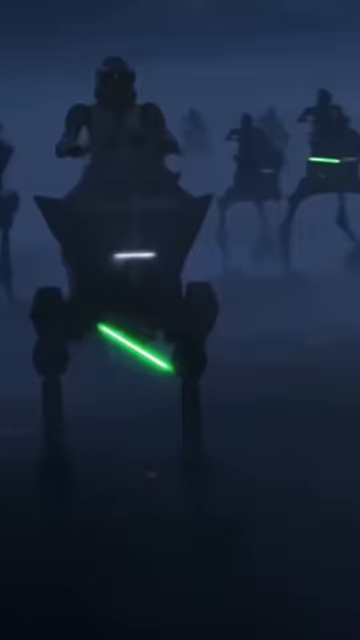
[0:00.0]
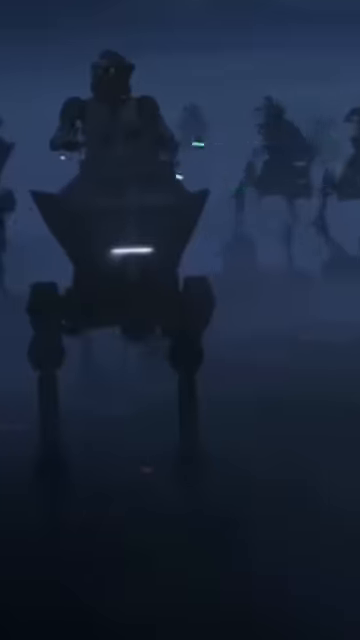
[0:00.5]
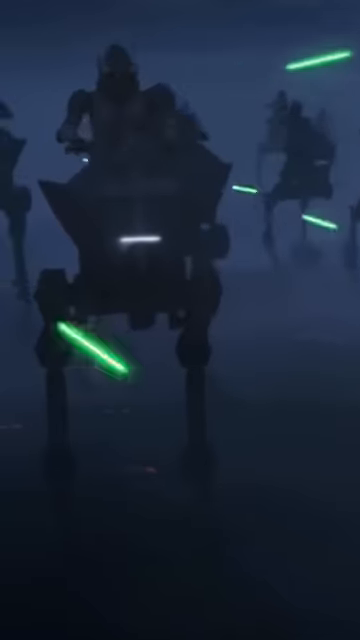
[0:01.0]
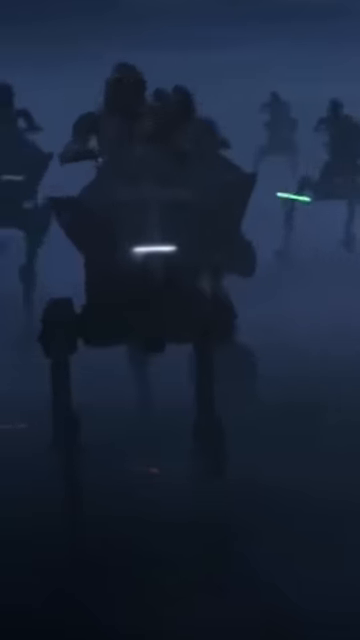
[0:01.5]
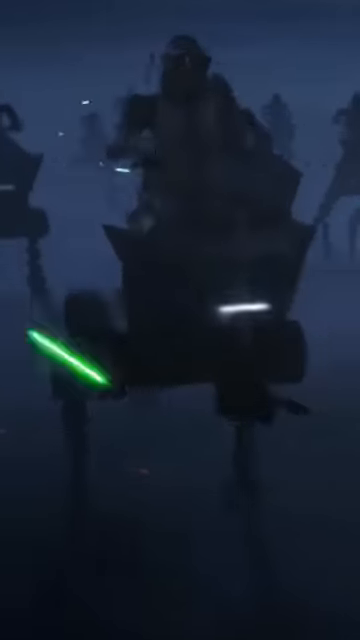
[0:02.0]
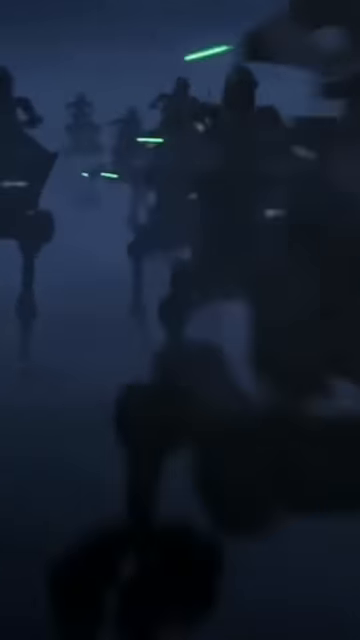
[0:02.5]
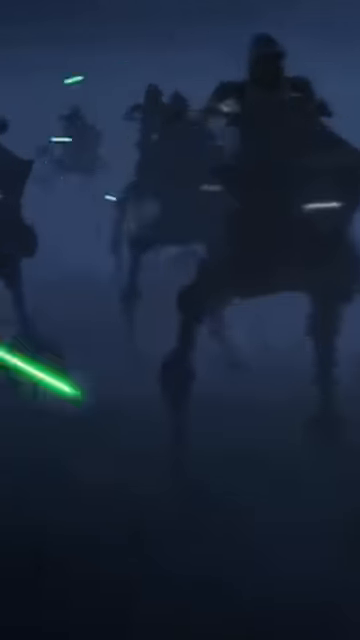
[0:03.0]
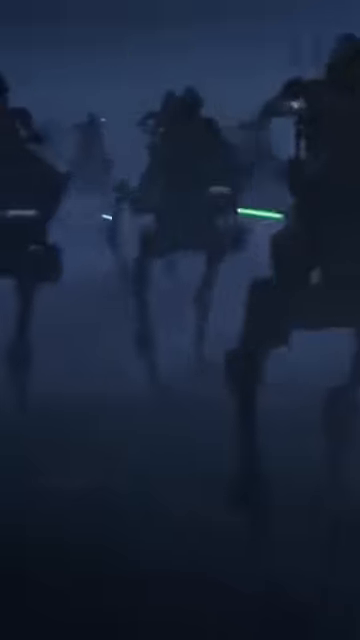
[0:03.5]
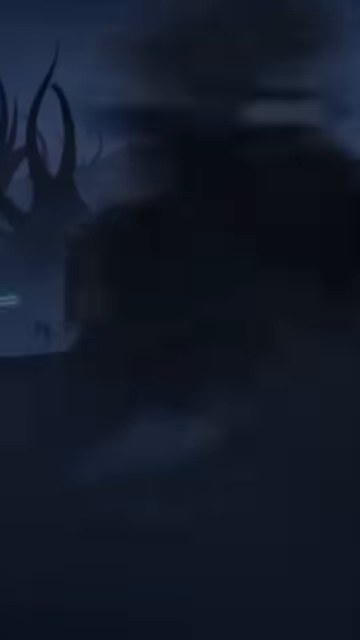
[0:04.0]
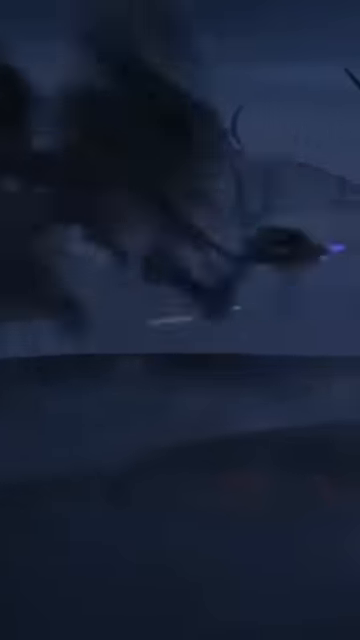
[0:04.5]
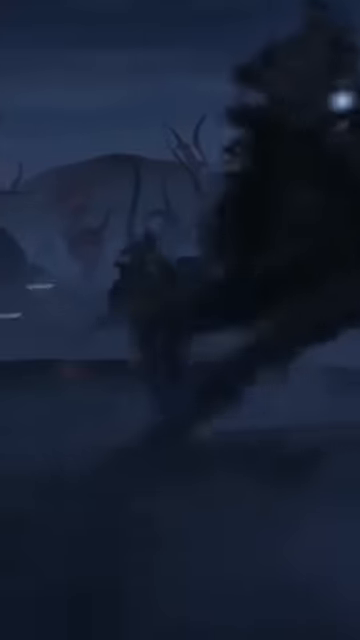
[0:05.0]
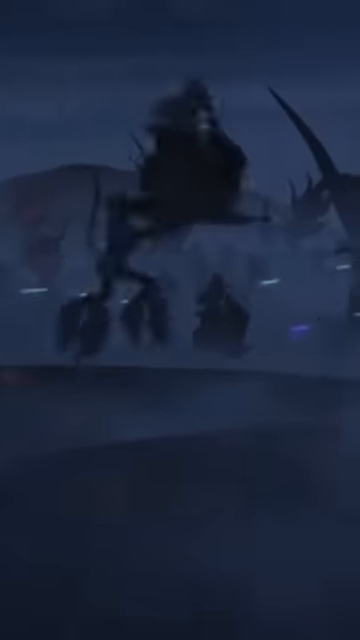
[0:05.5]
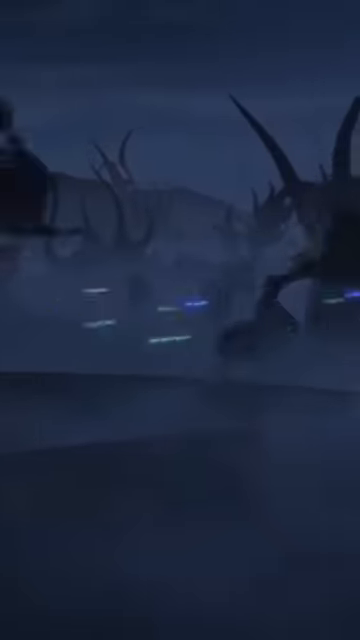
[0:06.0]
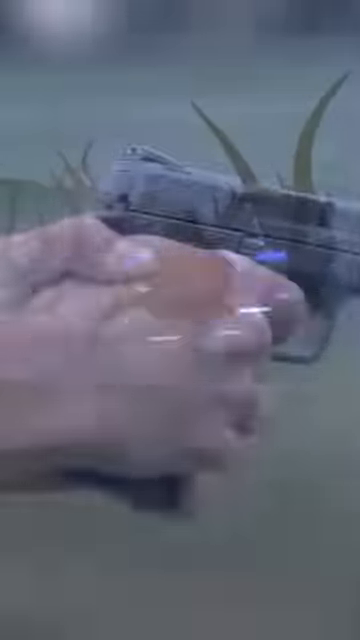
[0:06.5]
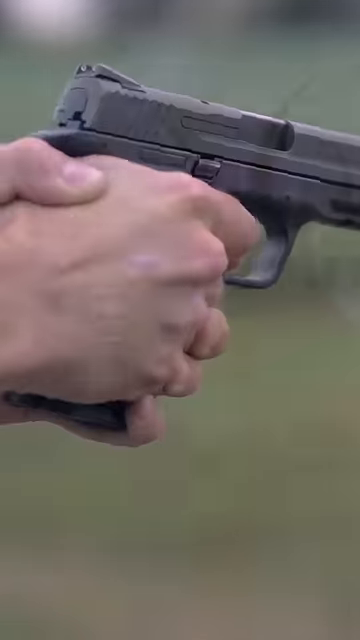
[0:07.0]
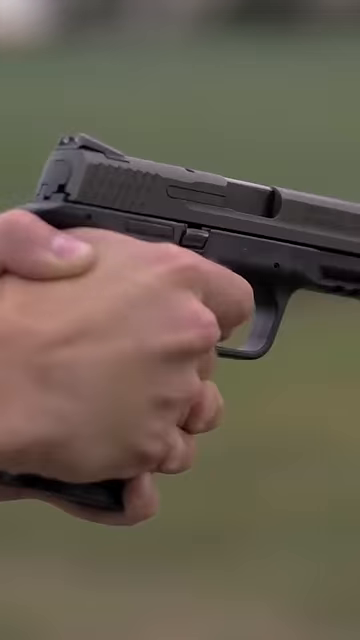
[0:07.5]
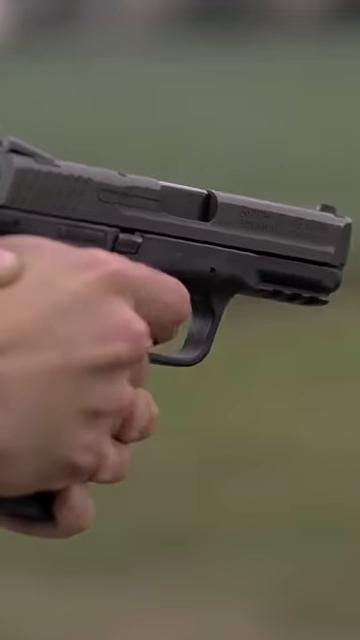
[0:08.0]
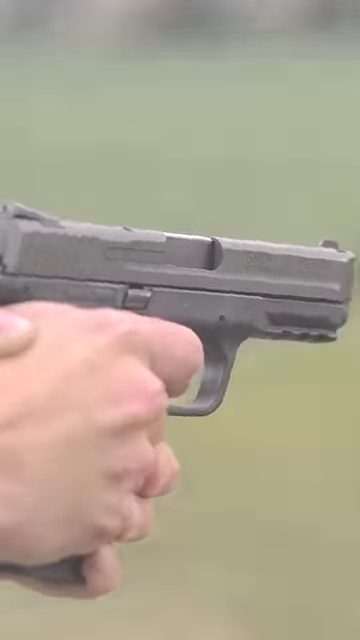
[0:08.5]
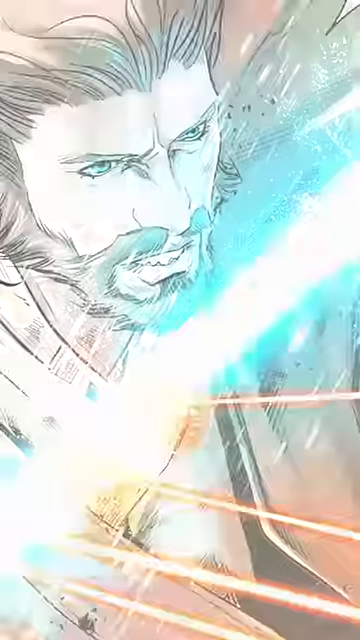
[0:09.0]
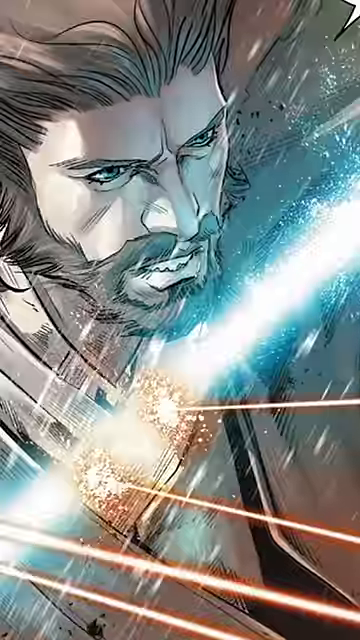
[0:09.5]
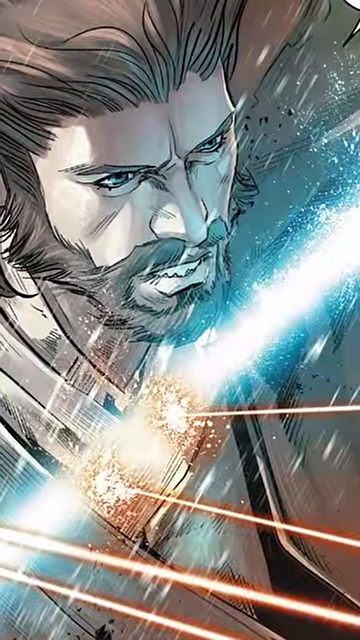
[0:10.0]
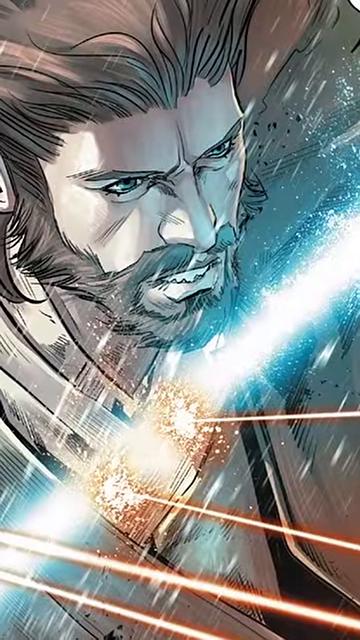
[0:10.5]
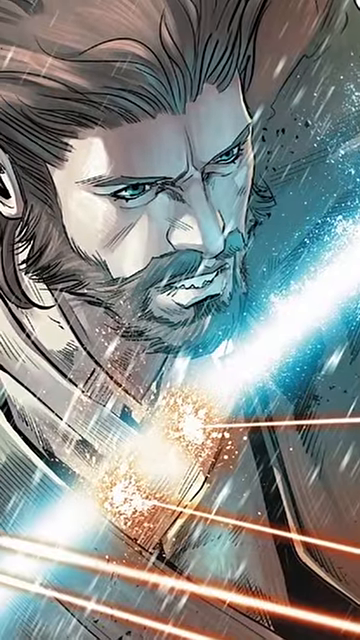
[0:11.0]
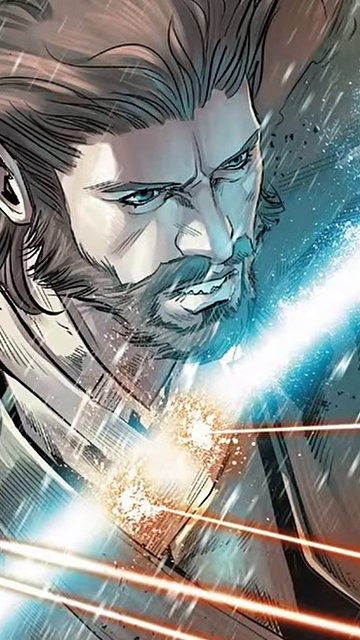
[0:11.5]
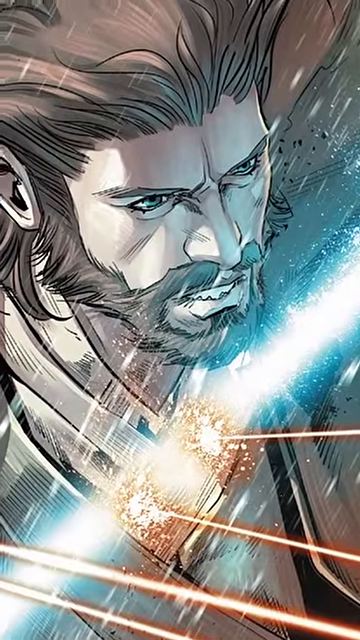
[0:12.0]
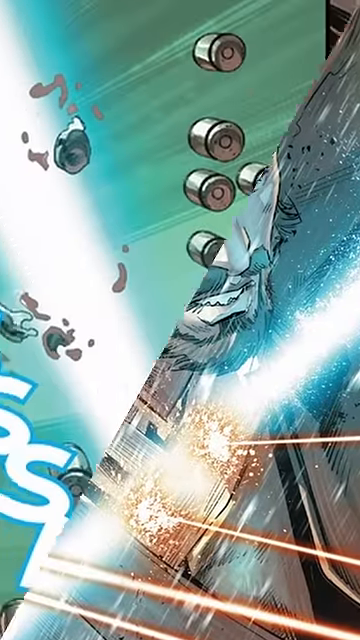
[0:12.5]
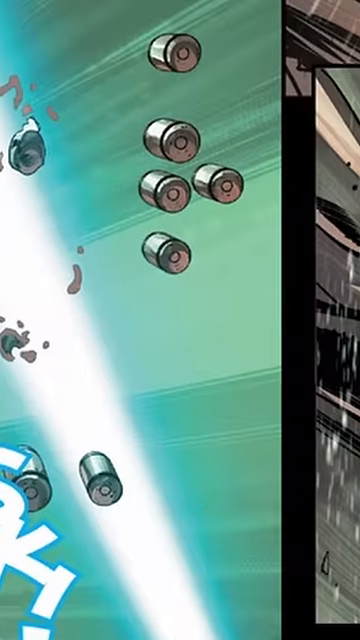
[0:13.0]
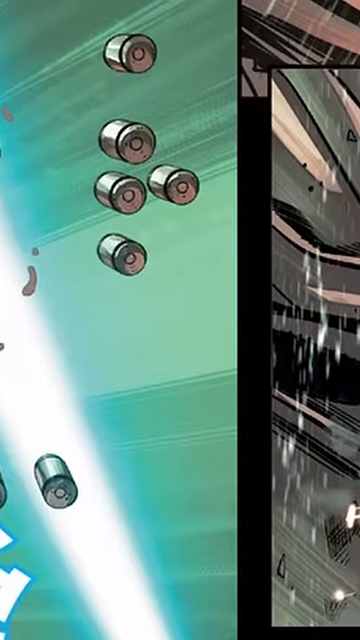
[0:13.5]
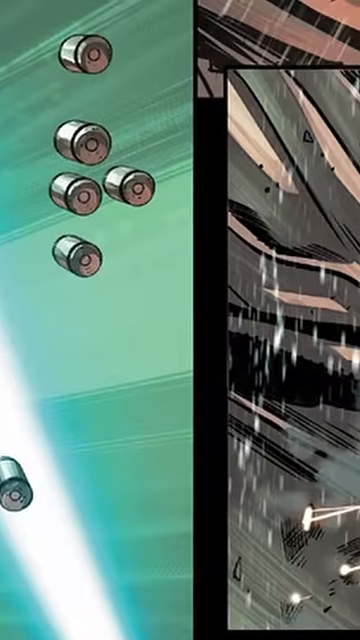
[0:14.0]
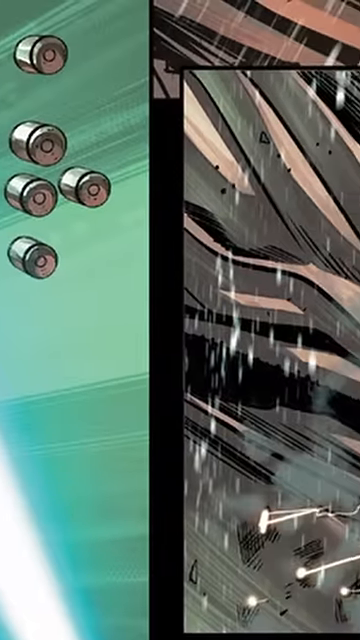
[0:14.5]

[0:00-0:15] What looks like Star Wars footage appears as a series of different clips. Stormtroopers ride on mechanical horses, legged creatures that seem to run through the terrain in a nighttime scene, while lightsabers shoot through them, apparently in some sort of war. A man then points a gun that looks like a 9mm. He is standing outside in what looks like a natural area, holding the gun properly and shooting it. Next comes a comic featuring a man, and the following panel of the comic shows what looks like bullets flying through.